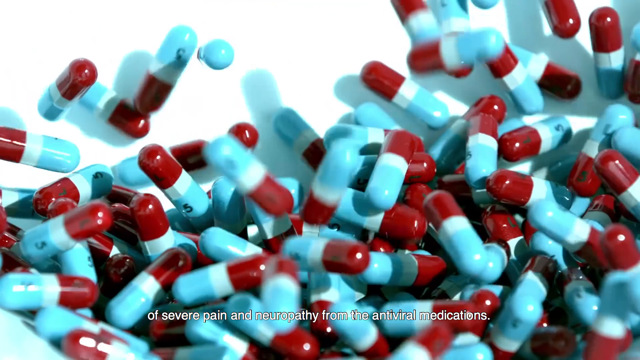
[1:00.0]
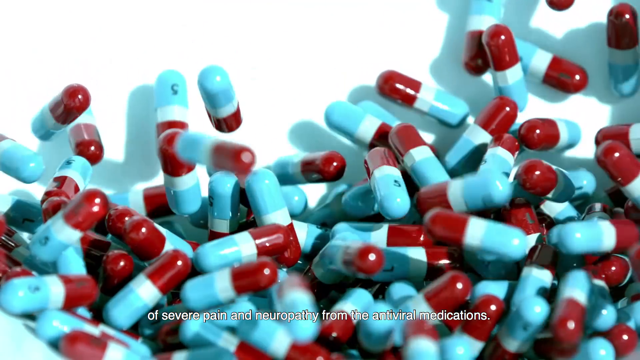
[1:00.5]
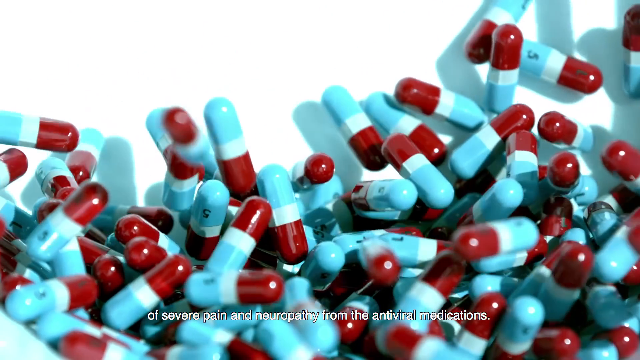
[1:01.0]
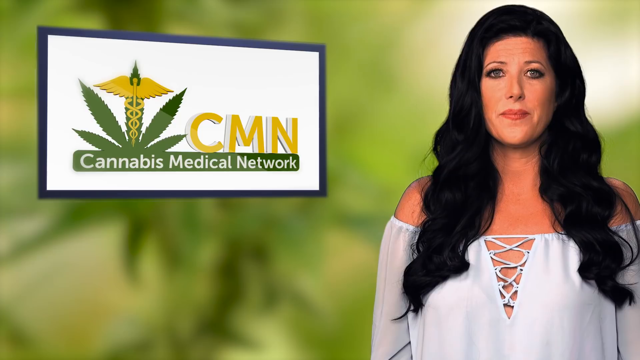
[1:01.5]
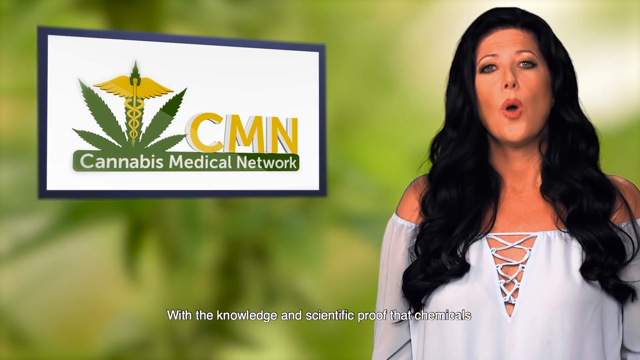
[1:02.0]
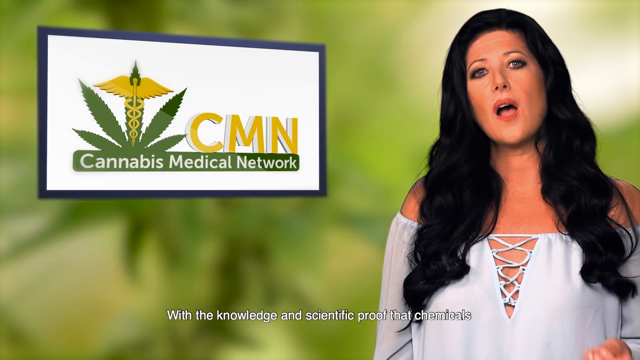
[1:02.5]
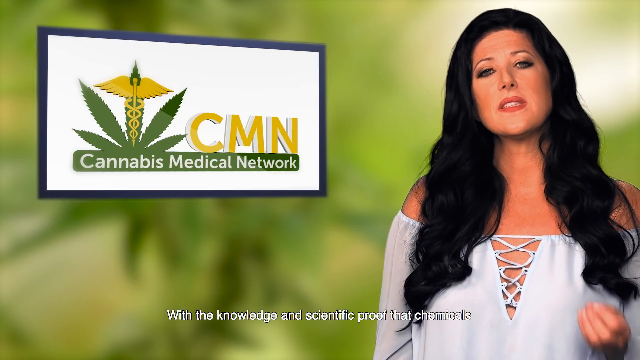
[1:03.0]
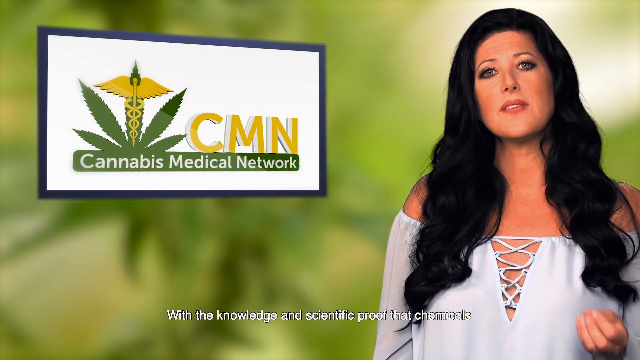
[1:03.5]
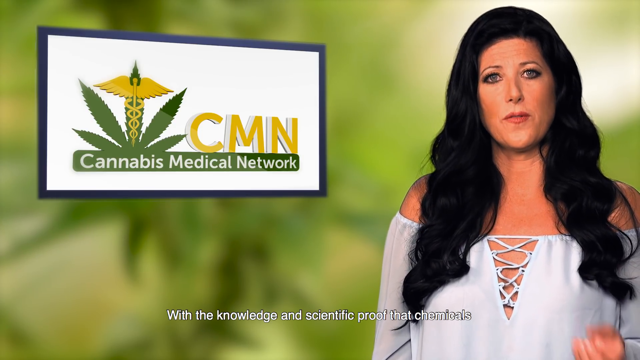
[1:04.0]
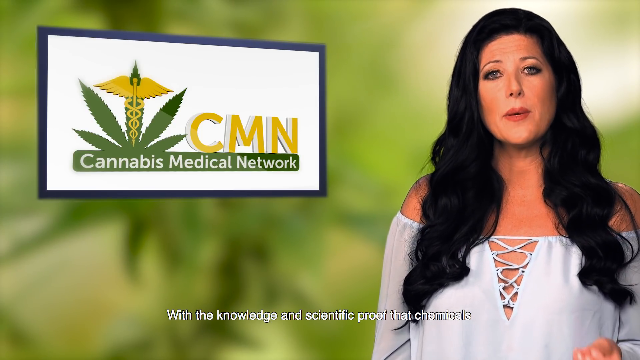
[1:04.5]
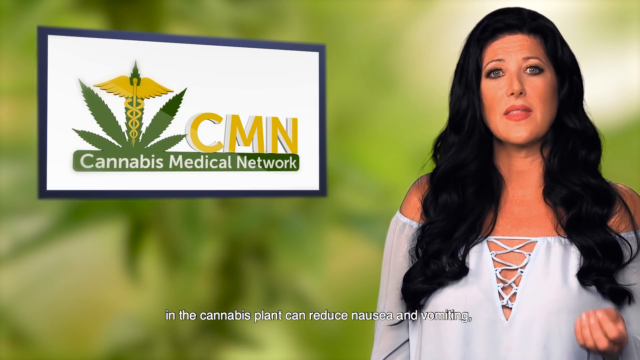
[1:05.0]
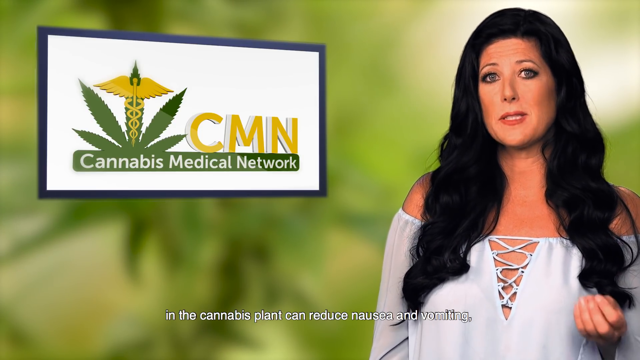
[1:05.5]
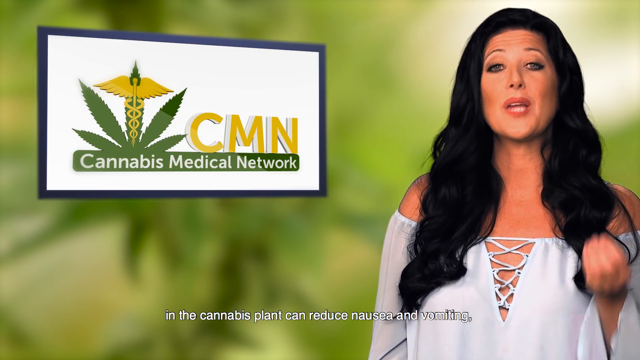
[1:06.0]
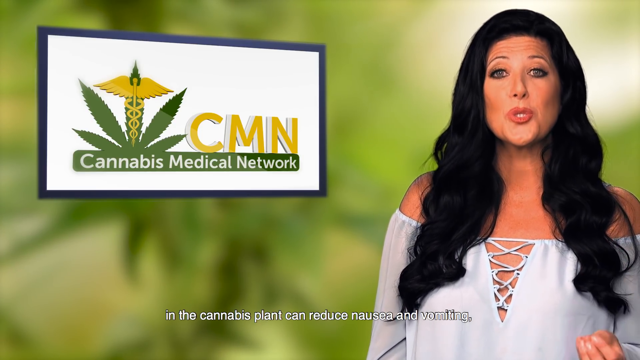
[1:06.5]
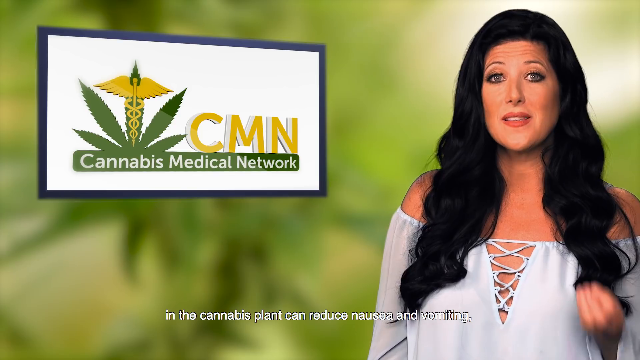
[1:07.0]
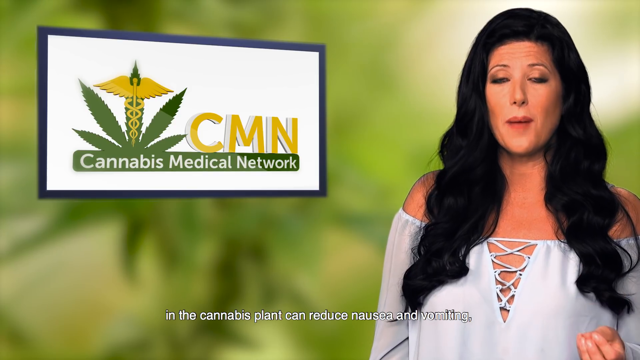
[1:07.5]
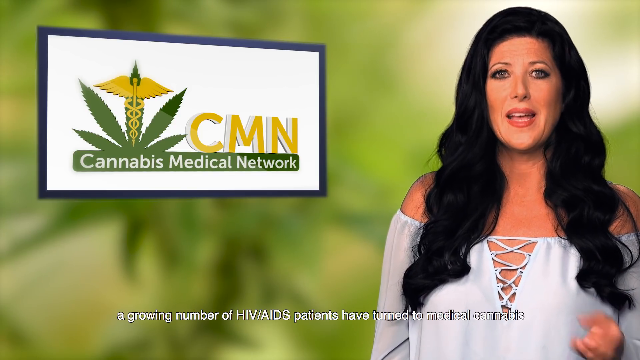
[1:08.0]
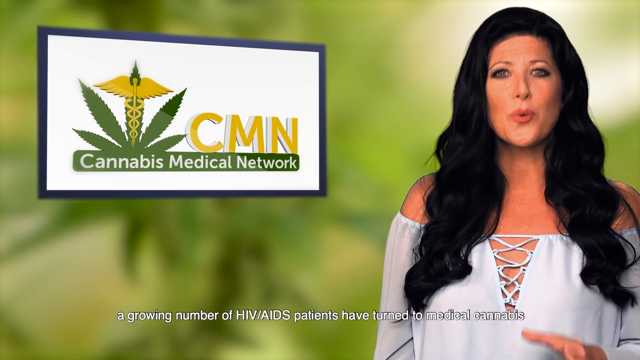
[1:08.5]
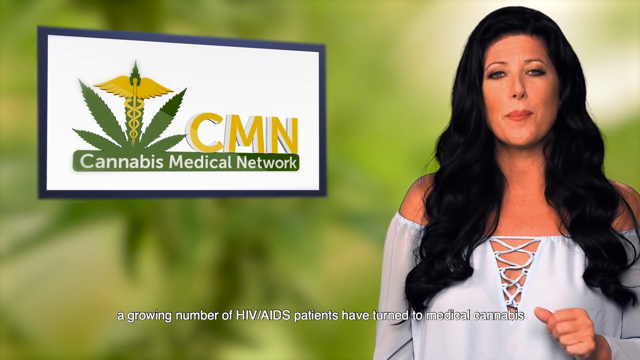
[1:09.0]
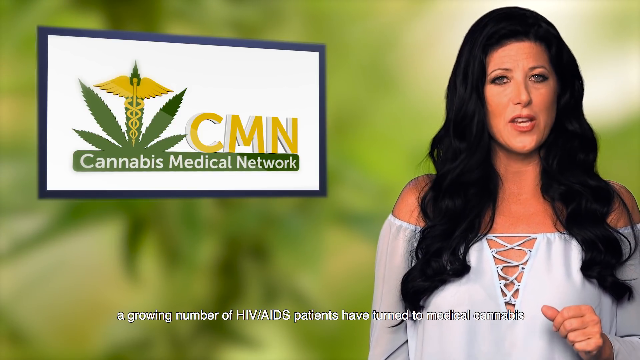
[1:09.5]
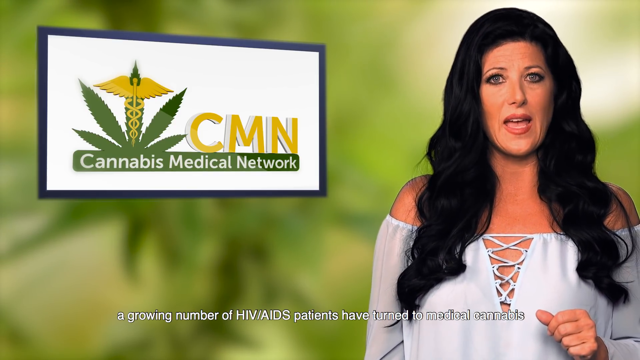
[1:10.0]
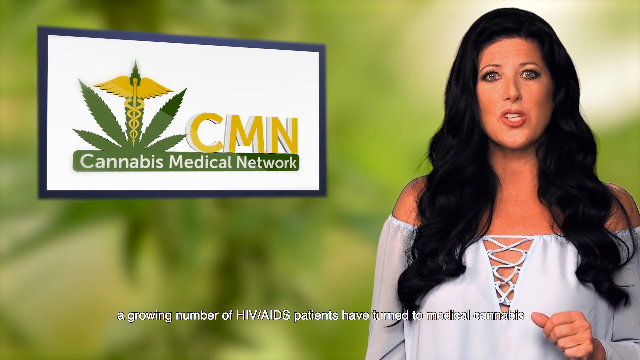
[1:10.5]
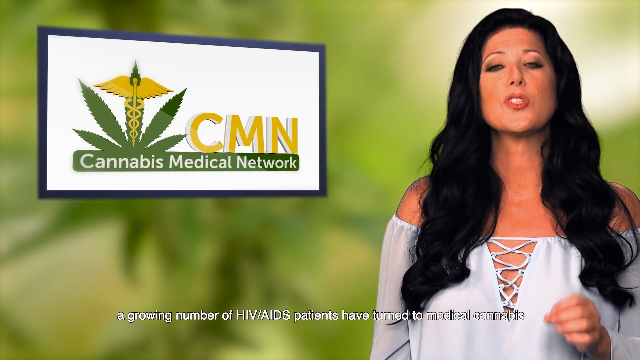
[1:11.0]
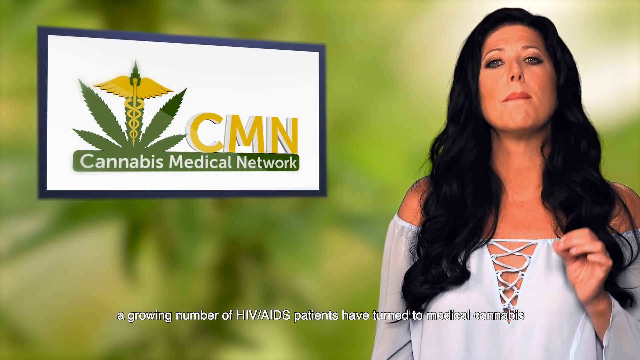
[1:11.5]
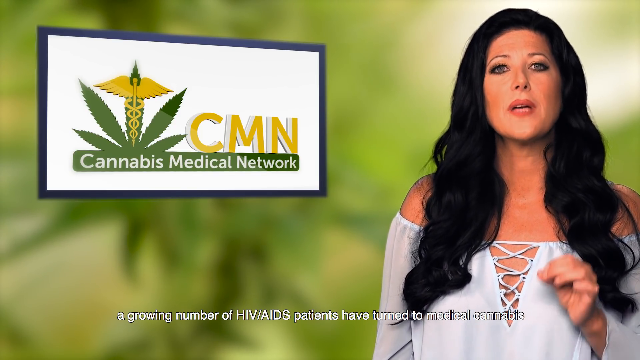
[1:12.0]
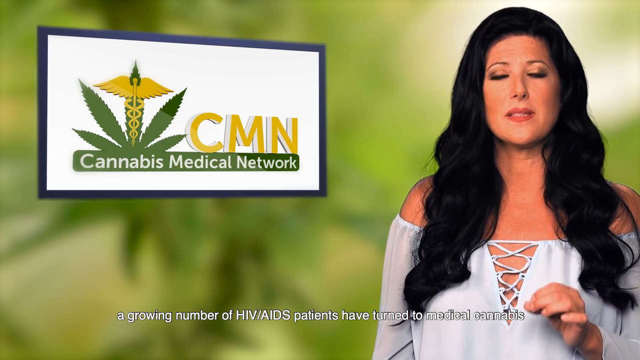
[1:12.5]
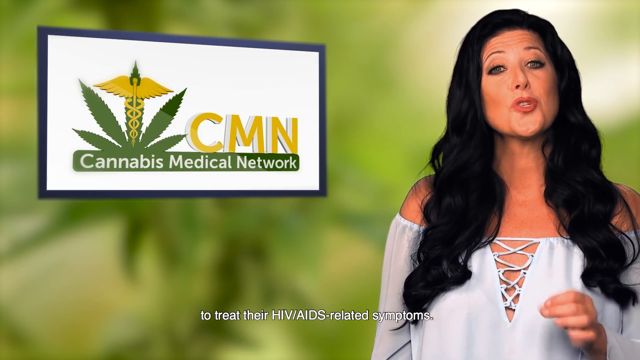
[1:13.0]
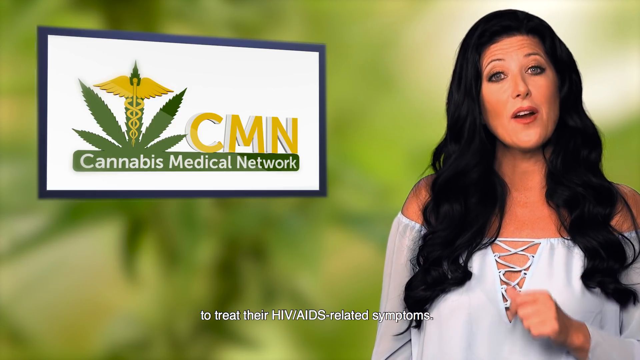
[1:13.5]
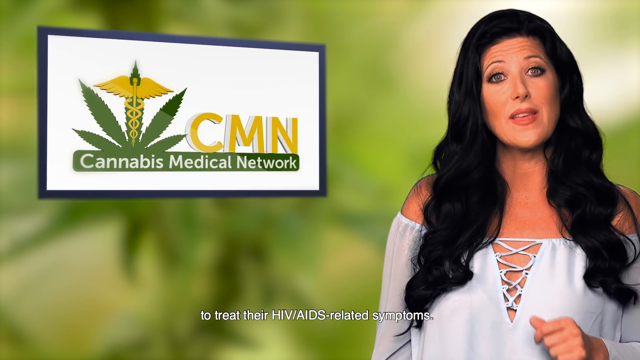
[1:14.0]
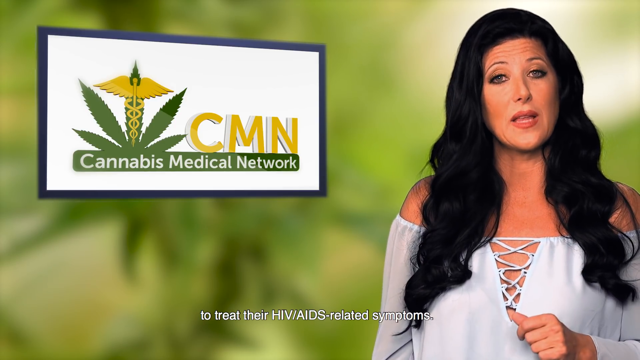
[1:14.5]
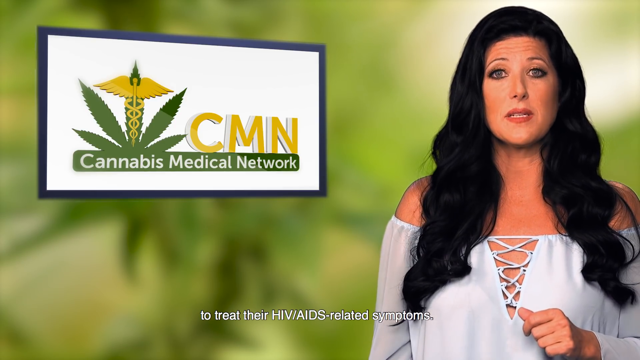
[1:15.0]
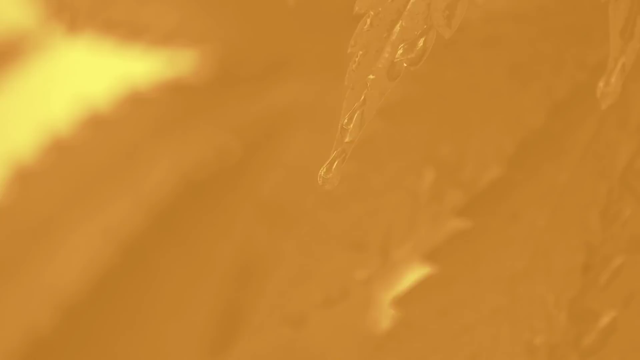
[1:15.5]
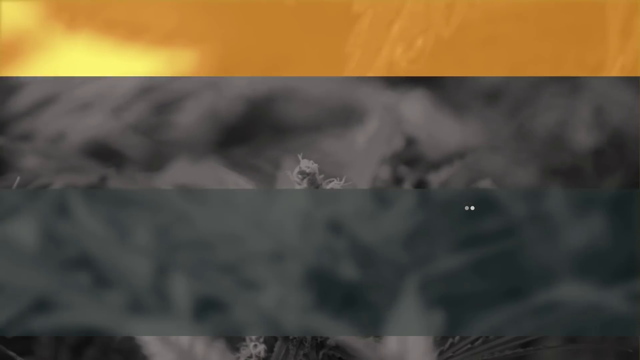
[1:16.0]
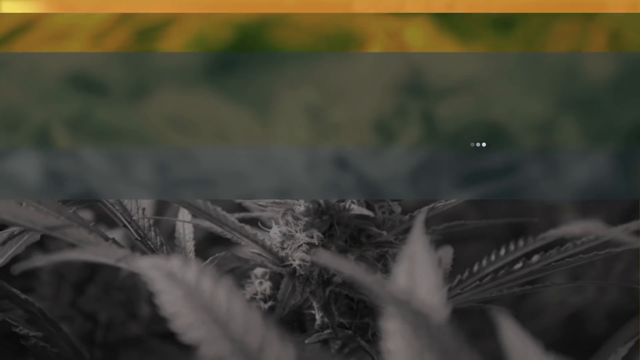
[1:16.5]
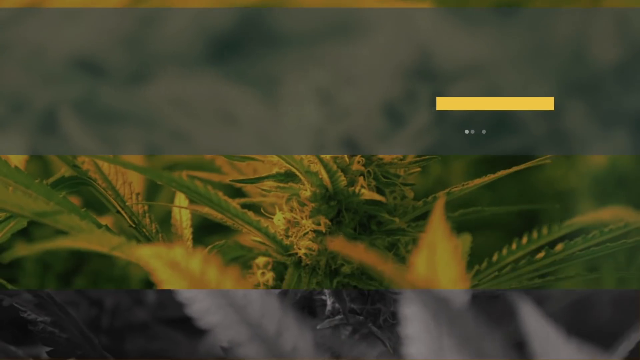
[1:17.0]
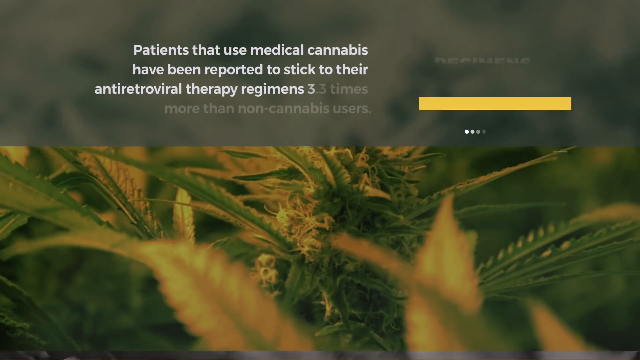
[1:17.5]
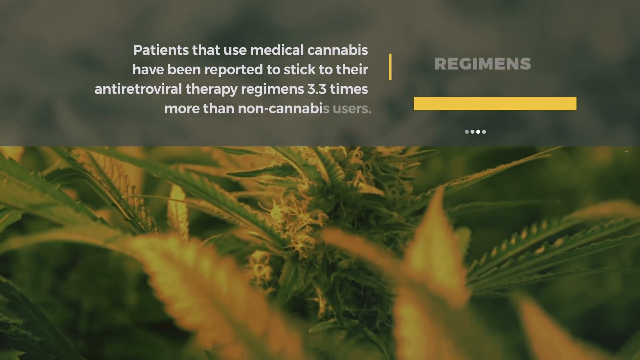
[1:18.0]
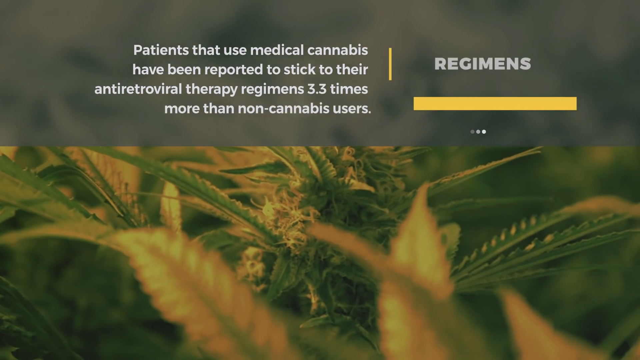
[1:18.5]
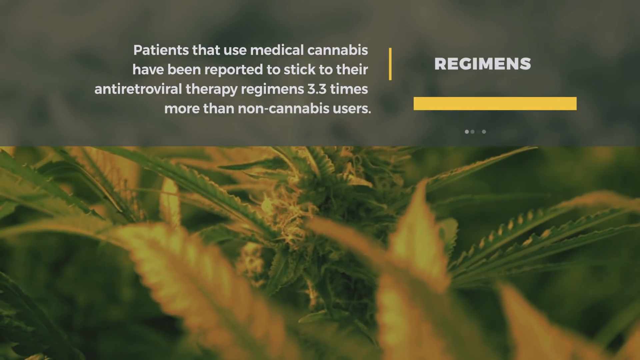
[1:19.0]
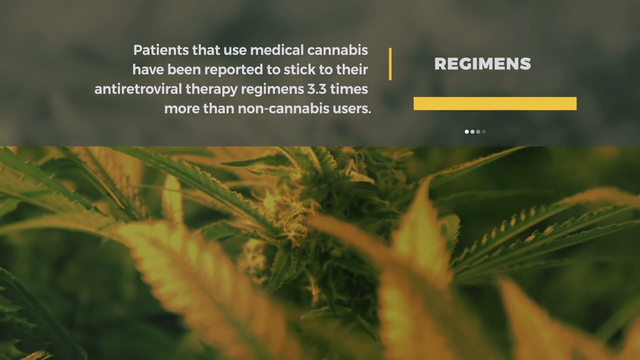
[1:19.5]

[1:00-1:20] Blue, red and white pills are kind of falling on top of each other in slow motion. The woman says, "With the knowledge and scientific proof that chemicals in the cannabis plant can reduce nausea and vomiting, a growing number of HIV/AIDS patients have turned to medical cannabis to treat their HIV/AIDS-related symptoms." The next screen kind of phases in, with medical leaves in the background, and text reads "patients that use medical cannabis have been reported to stick to their antiretroviral therapy regimens 3.3 times more than non cannabis users," with the word "regimens" next to it in white letters.